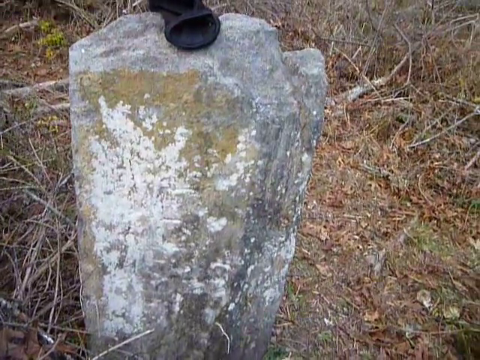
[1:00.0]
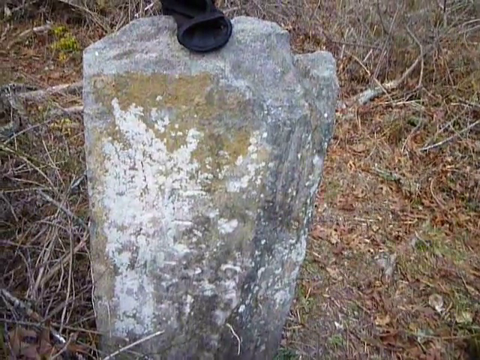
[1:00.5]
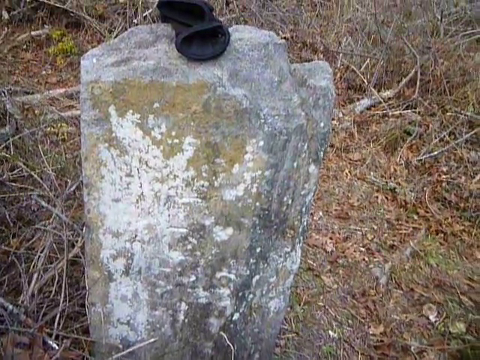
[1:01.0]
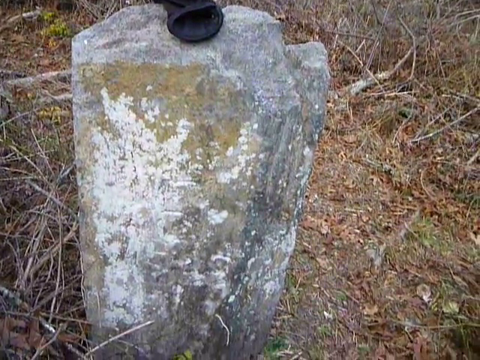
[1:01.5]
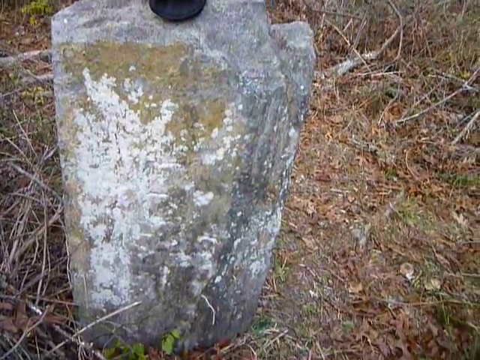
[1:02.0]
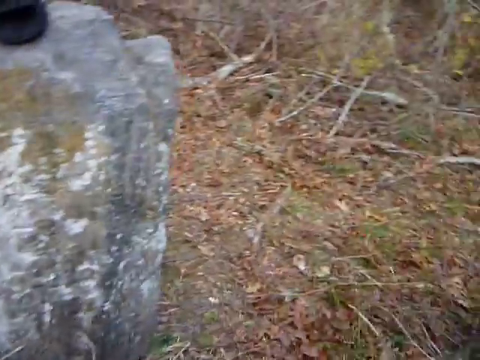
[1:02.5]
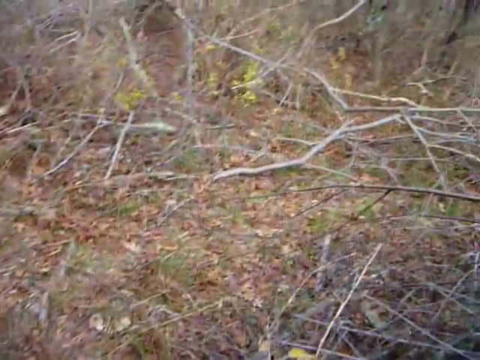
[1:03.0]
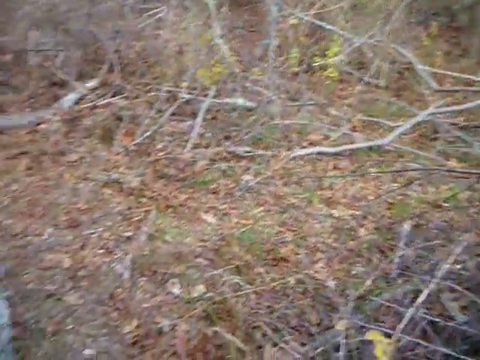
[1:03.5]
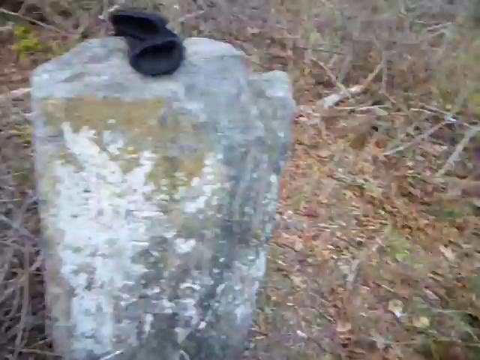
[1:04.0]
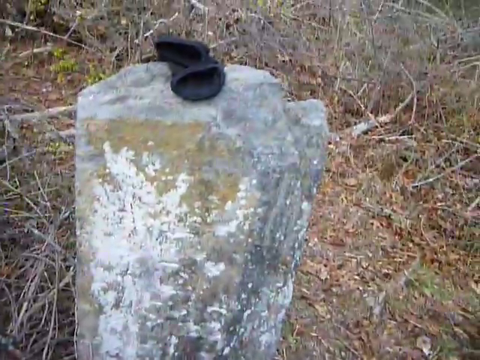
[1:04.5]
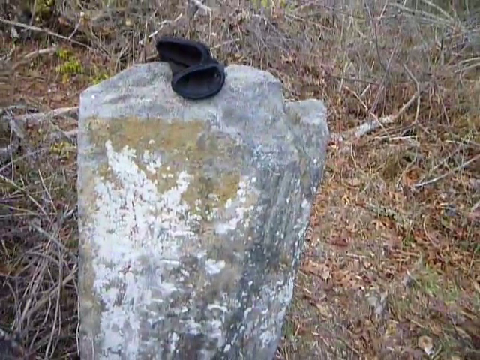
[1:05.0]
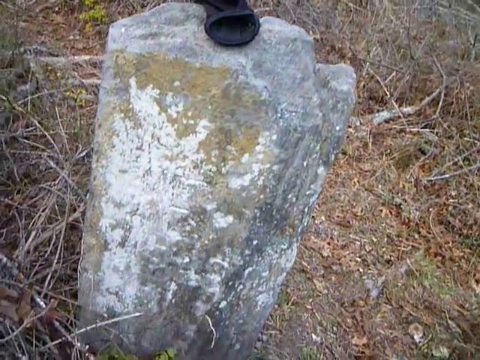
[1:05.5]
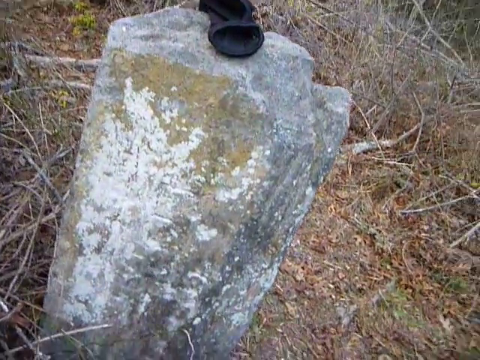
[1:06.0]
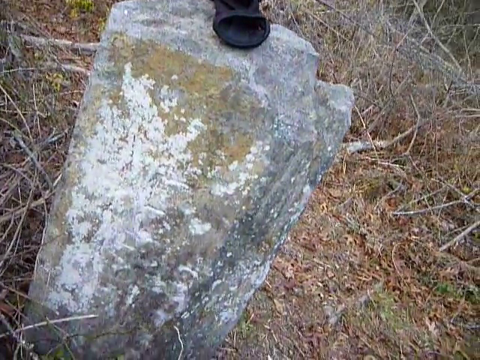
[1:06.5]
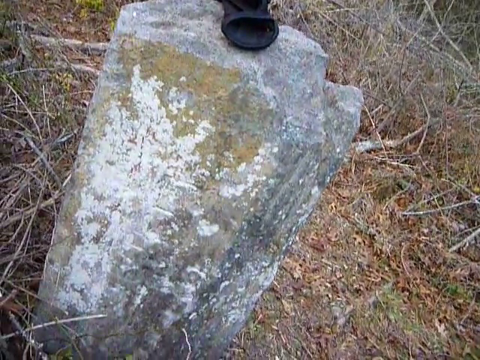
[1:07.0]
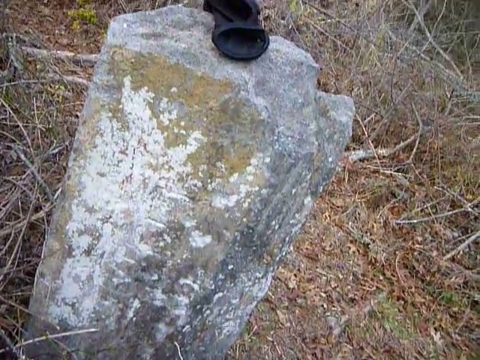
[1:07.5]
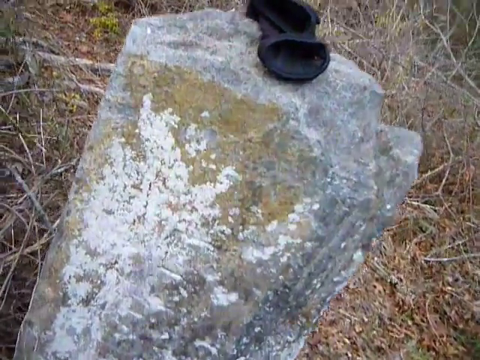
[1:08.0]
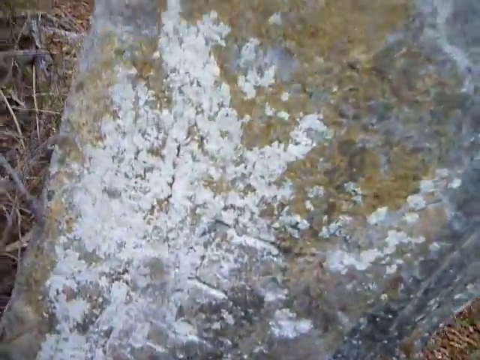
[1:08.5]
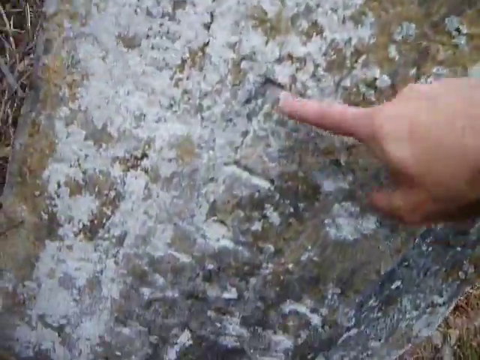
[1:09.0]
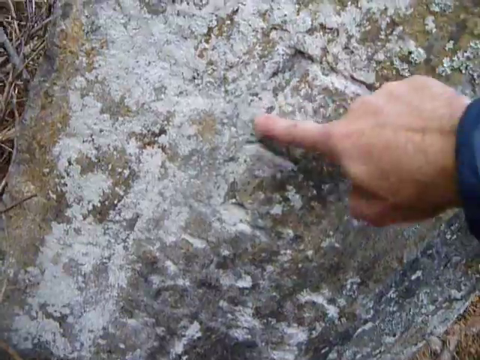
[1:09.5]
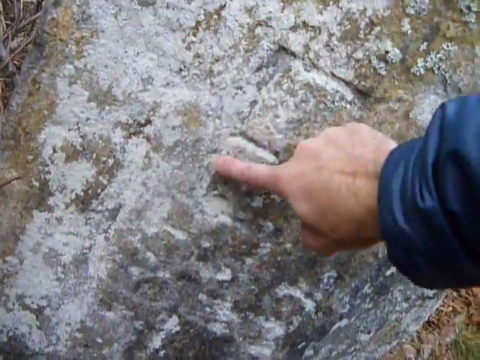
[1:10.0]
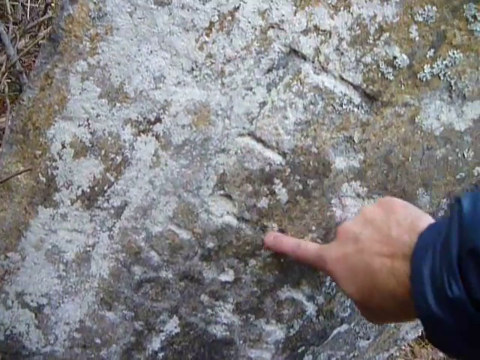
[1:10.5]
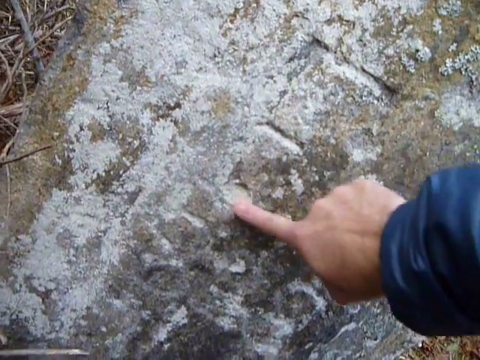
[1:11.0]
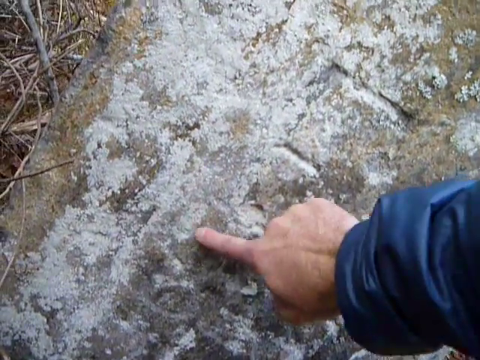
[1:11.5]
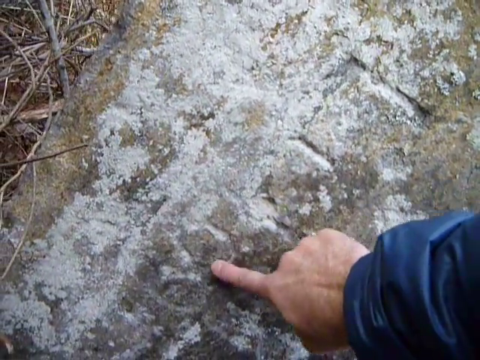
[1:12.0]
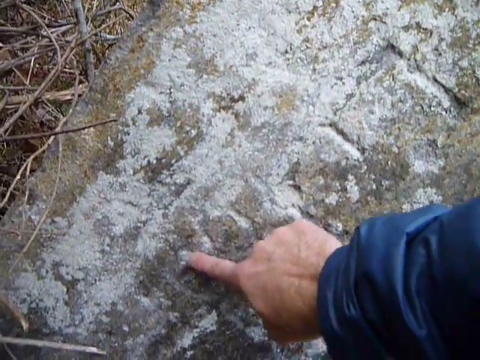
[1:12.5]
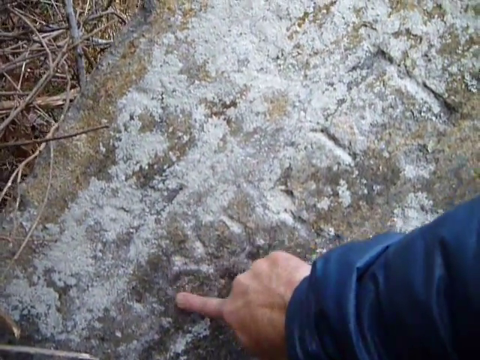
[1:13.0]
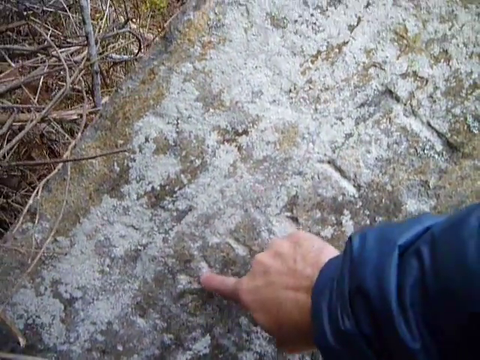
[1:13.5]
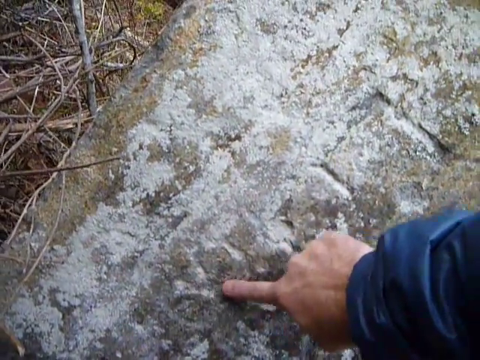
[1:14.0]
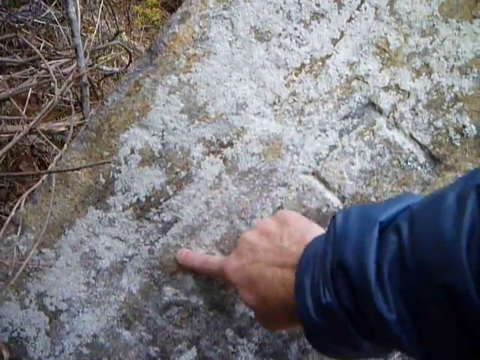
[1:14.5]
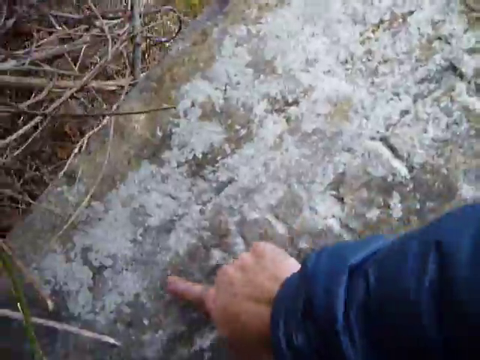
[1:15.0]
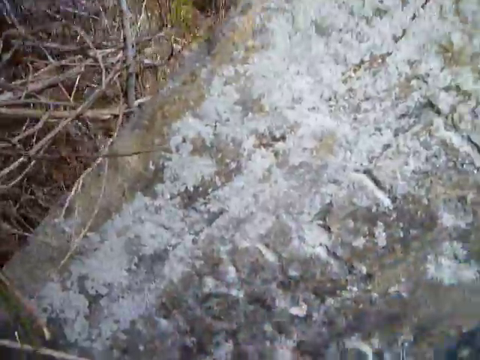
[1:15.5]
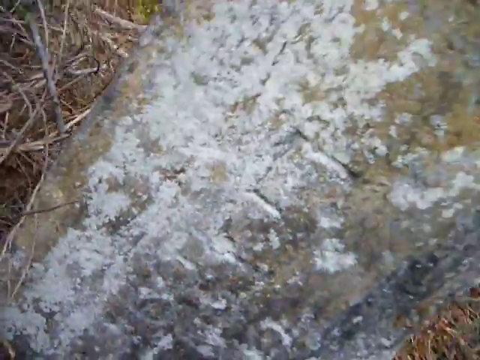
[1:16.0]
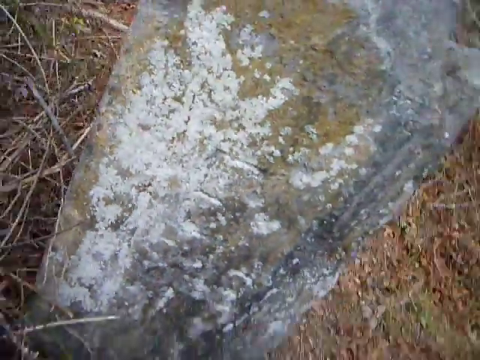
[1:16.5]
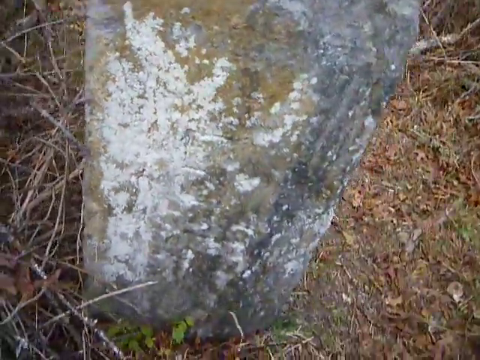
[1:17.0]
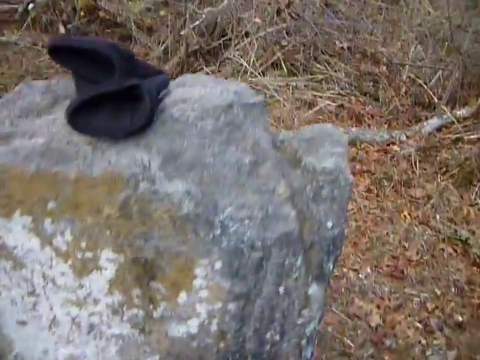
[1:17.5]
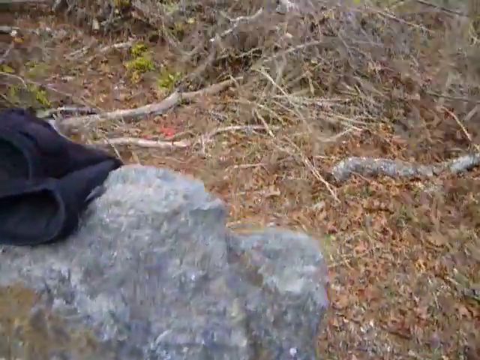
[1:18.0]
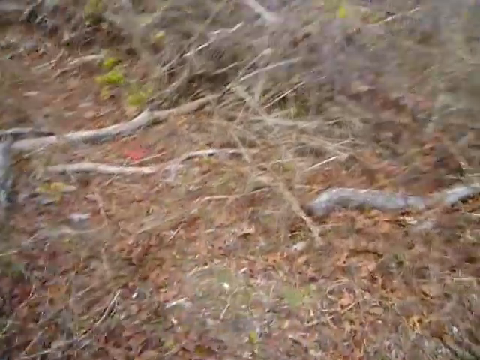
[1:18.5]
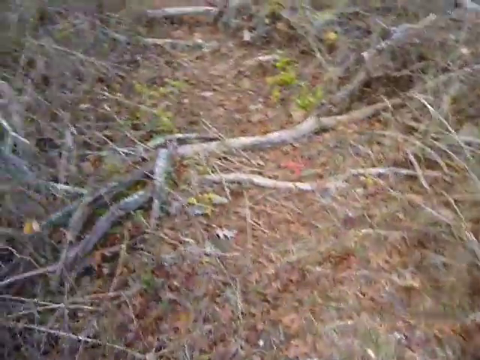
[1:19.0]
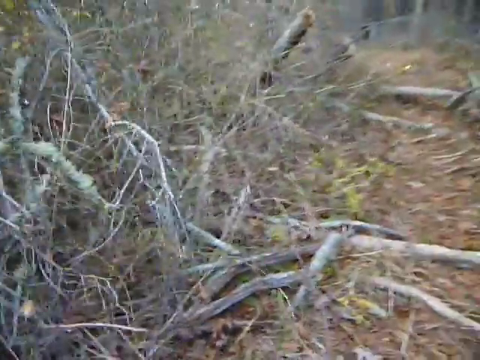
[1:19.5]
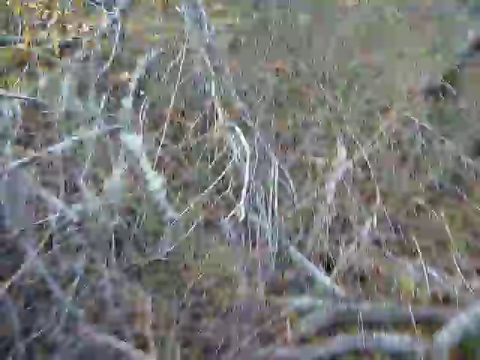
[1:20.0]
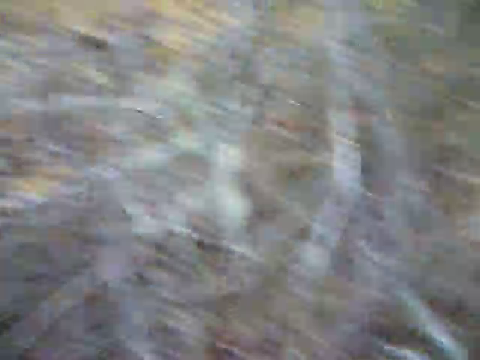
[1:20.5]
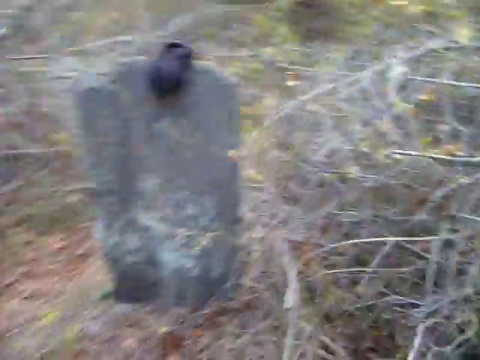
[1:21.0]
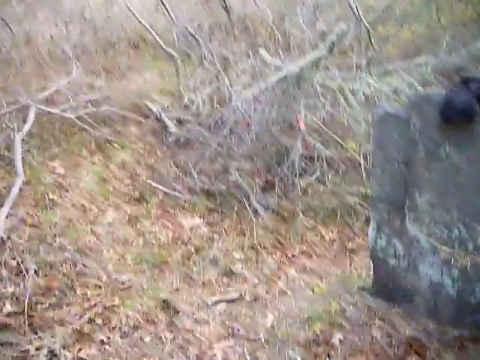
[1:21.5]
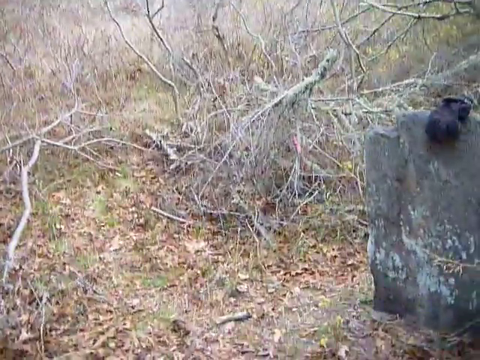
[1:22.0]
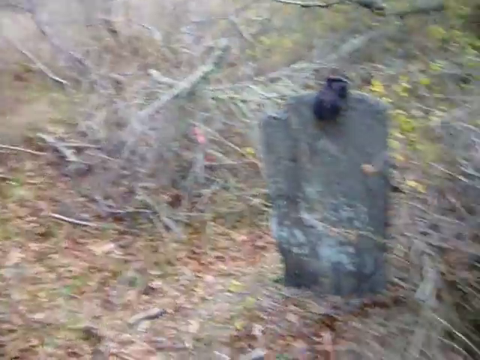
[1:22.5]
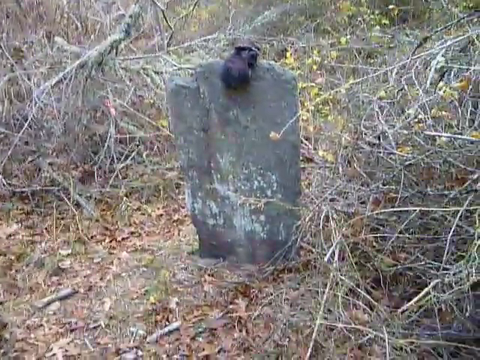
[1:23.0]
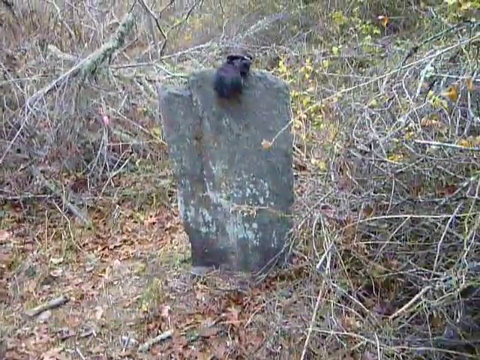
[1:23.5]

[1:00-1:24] The person keeps filming the engravings on the tombstone for a moment, then approaches again and points with his right hand at the marks. He seems to focus on the same lines and the same hole before moving on to others even lower down, which are a little harder to notice, and he seems to point at them. The view then returns to the front of the tombstone, and the person turns around to film it from about a meter or two away for a few more seconds until the end of the video. The tombstone with the pair of black gloves on top remains in view, with the pile of branches on the sides.